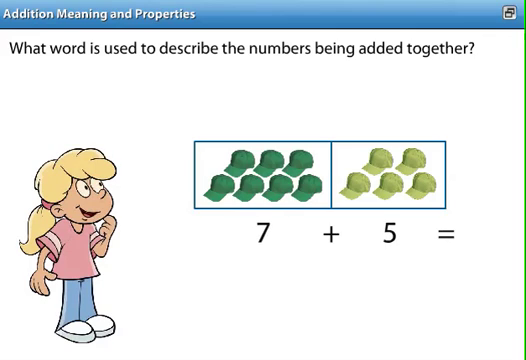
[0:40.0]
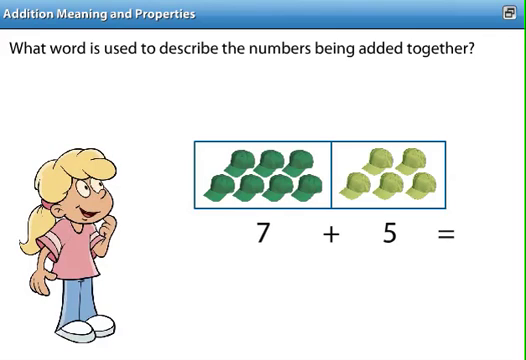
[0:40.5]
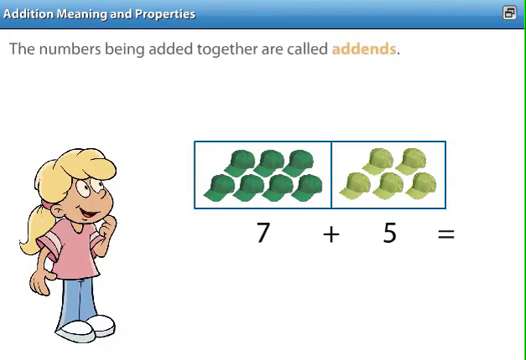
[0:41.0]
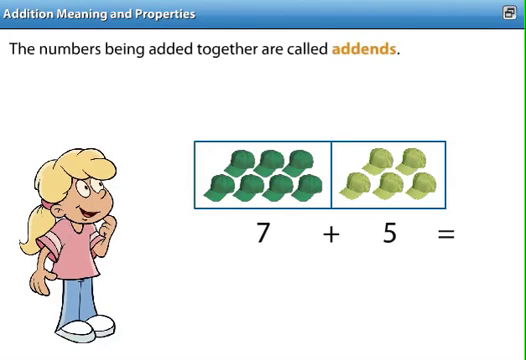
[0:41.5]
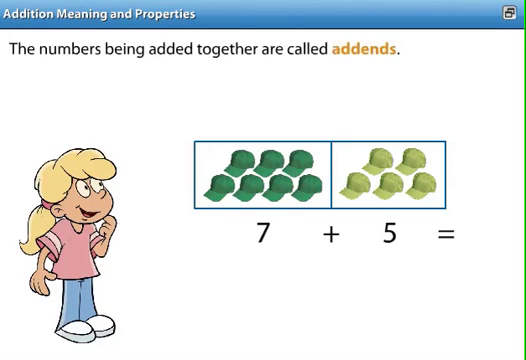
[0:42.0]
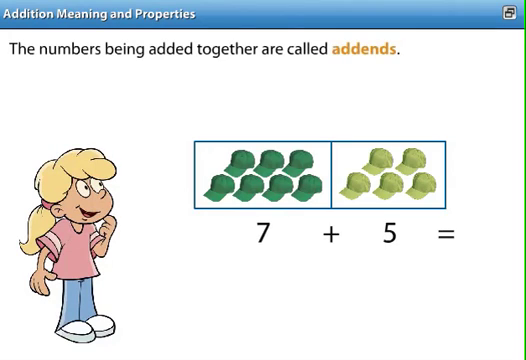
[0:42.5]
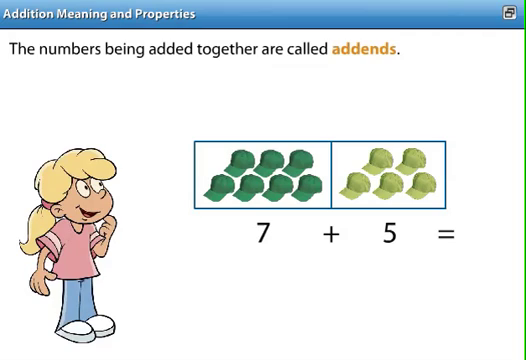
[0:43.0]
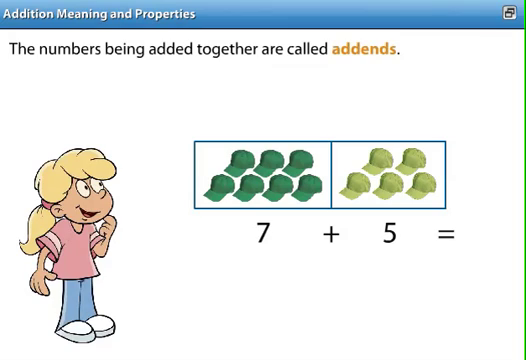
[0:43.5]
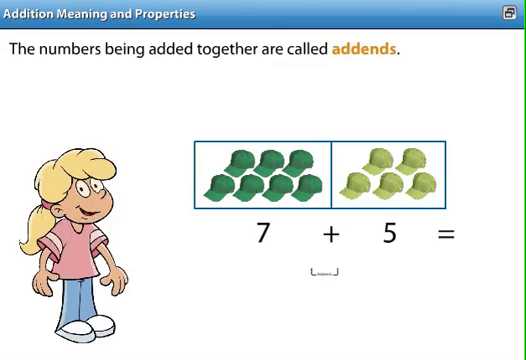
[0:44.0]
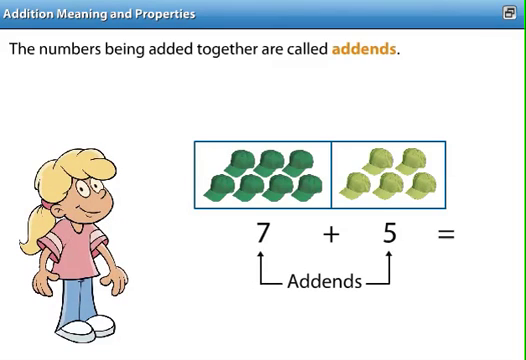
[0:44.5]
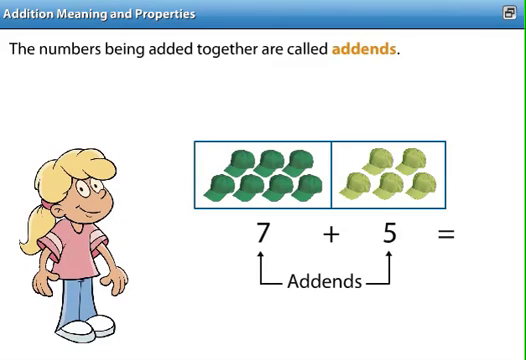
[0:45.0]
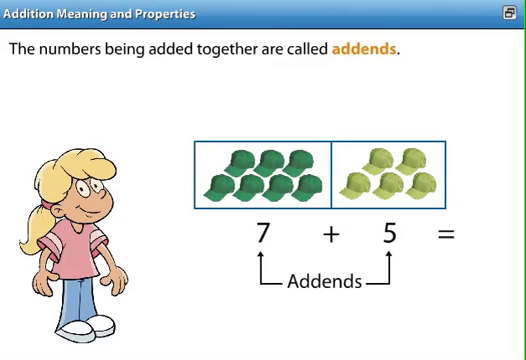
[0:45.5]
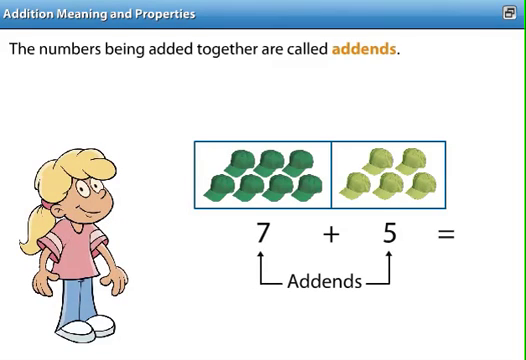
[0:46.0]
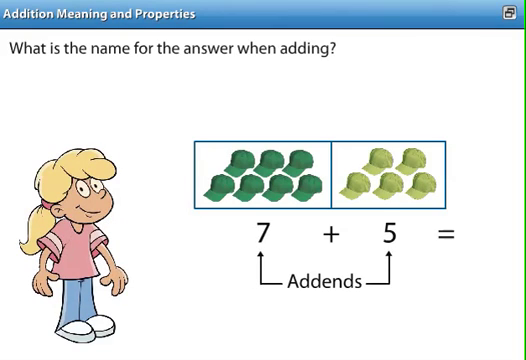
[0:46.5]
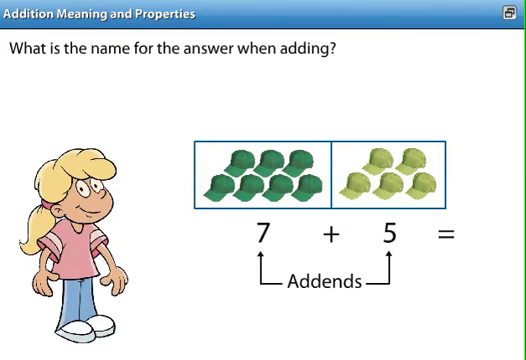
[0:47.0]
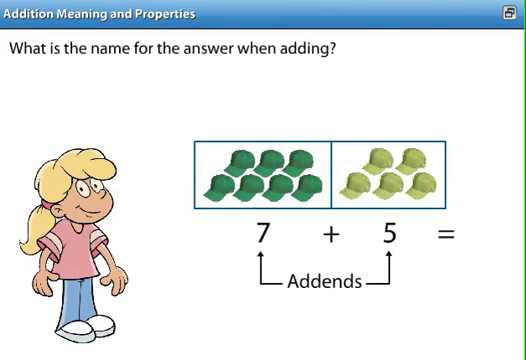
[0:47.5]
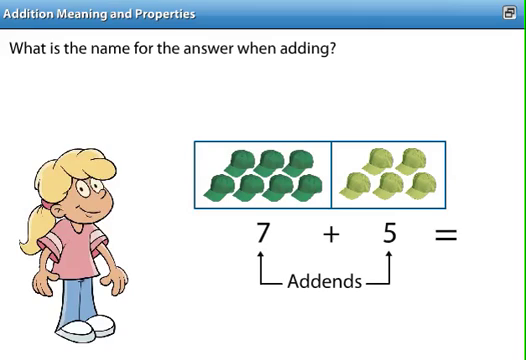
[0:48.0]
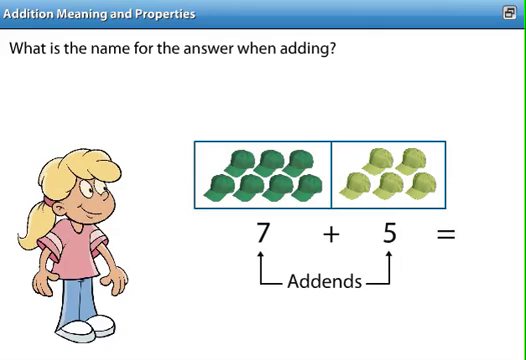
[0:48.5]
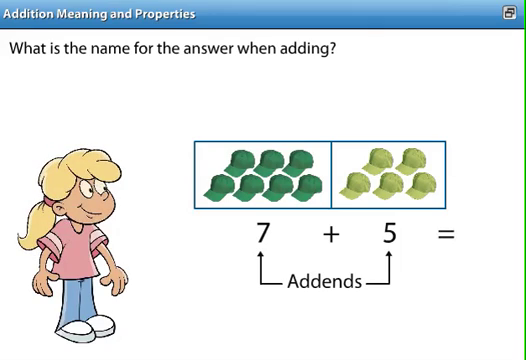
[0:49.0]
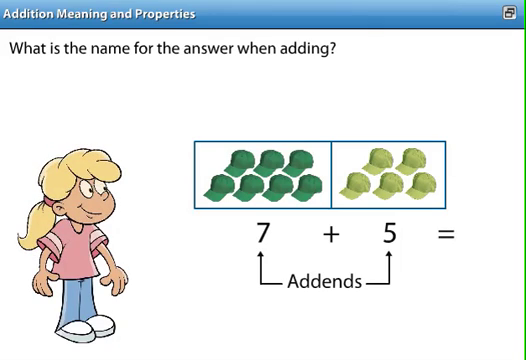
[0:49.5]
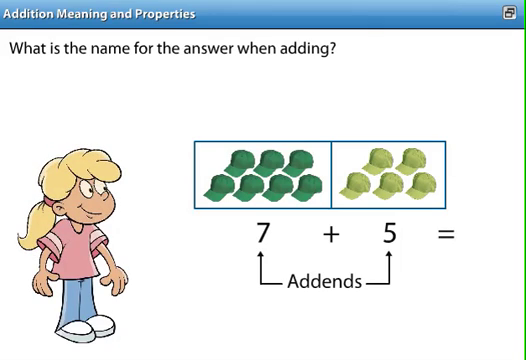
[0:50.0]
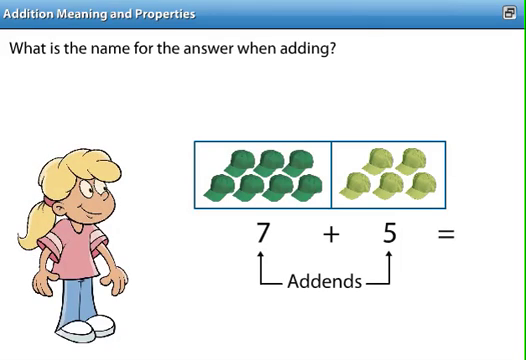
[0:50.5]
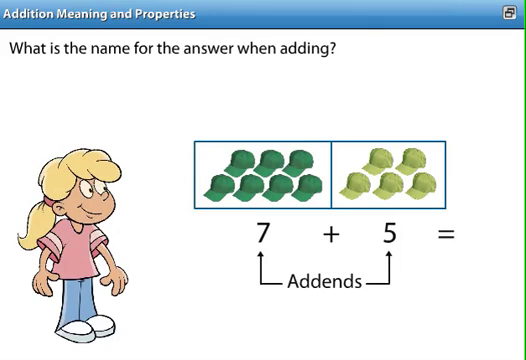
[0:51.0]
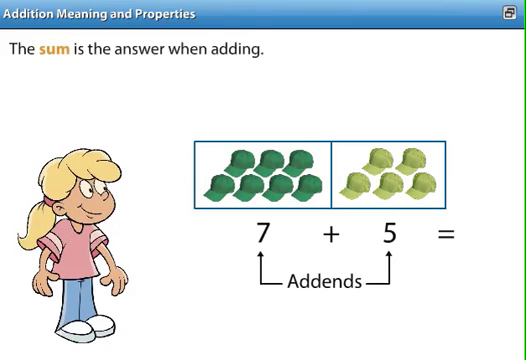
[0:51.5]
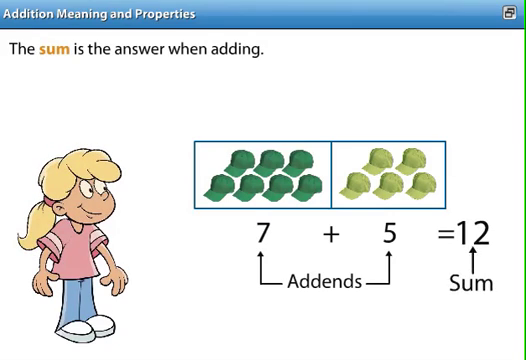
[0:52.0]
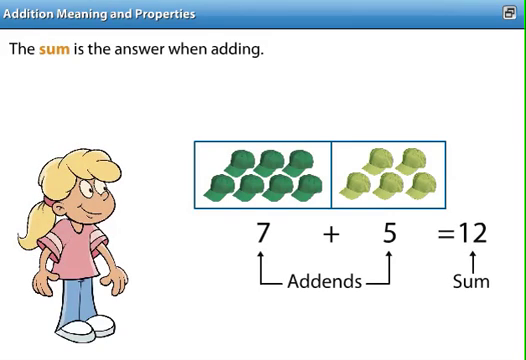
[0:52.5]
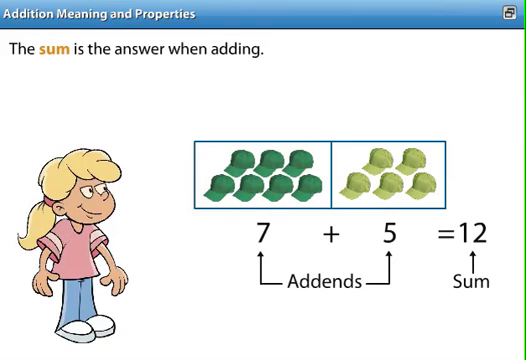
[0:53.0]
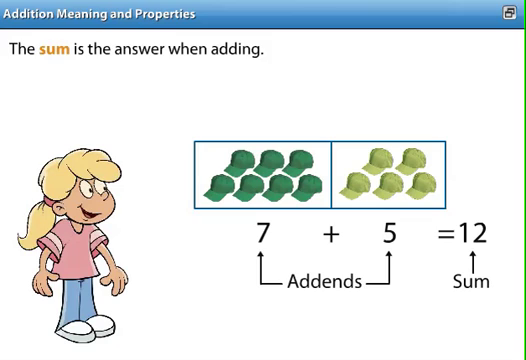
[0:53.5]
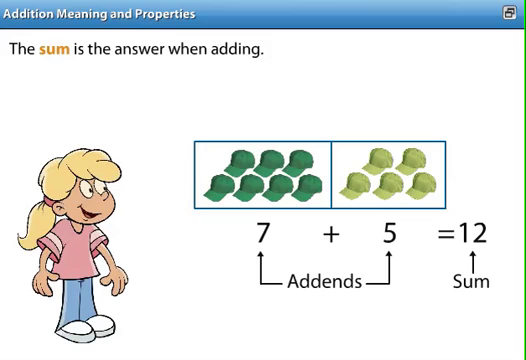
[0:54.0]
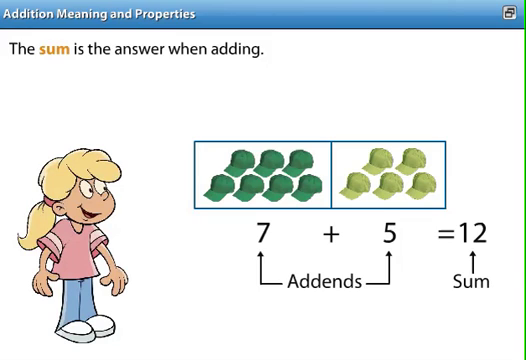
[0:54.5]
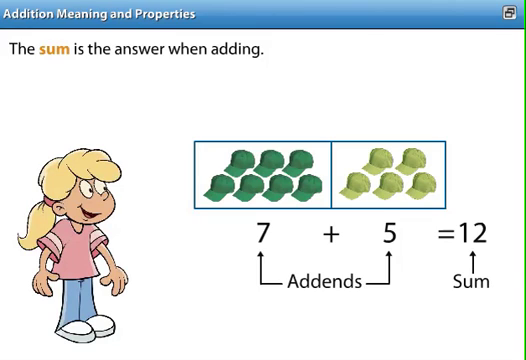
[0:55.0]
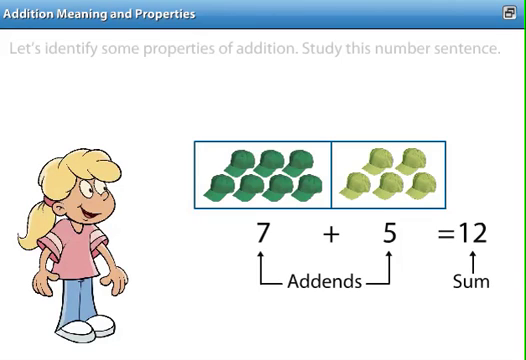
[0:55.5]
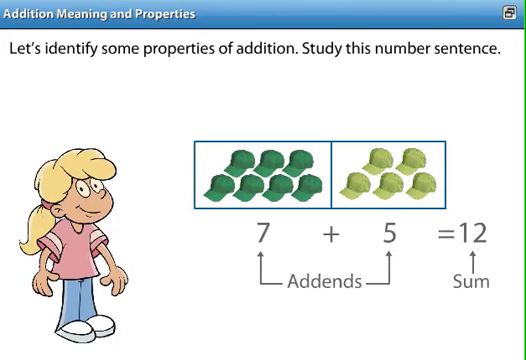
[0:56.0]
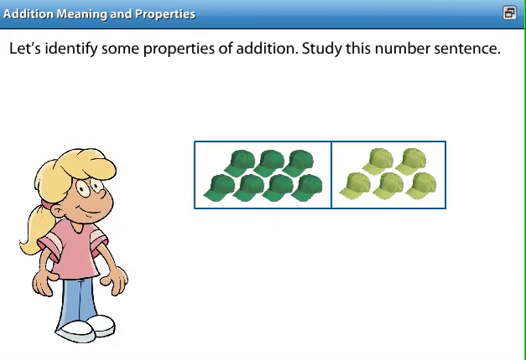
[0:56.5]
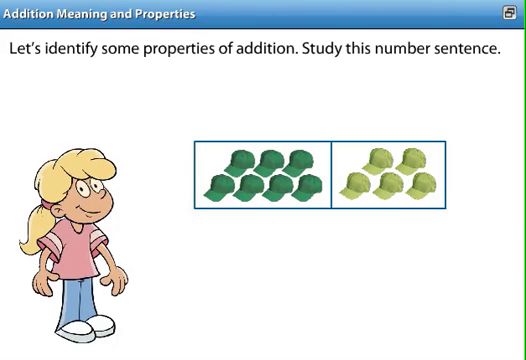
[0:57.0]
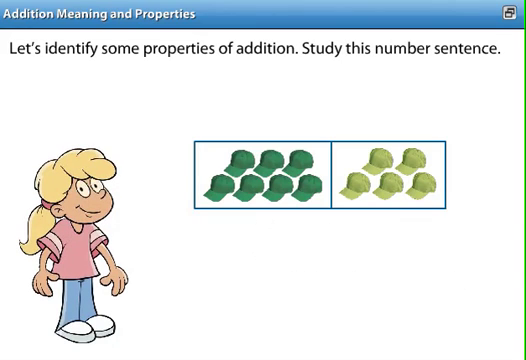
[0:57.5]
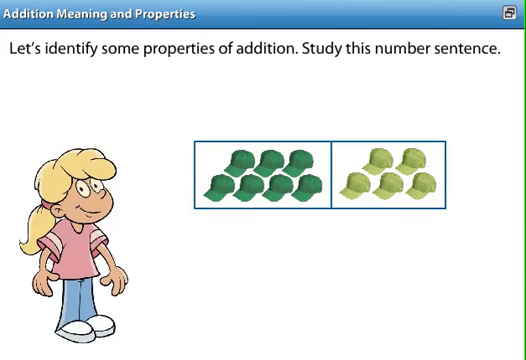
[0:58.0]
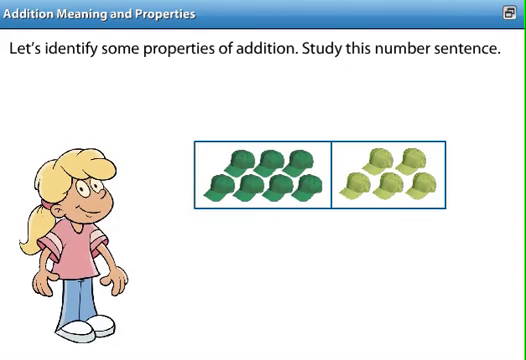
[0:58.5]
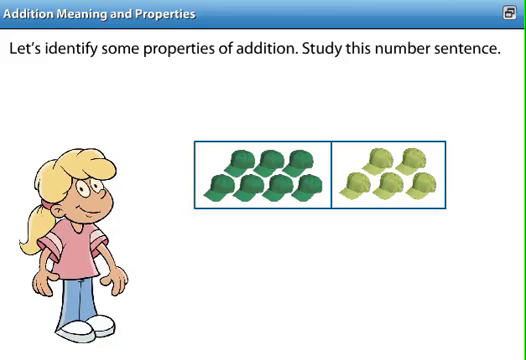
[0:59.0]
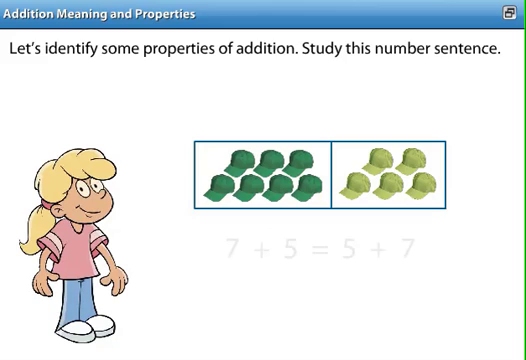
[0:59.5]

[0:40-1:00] The top sentence changes to answer the question, reading "the numbers being added together are called addends," and arrows pointing to the seven and five below converge on the word "addends." The question changes to "What is the name for the answer while adding?" and then to its answer, "The sum is the answer when adding." The number 12 appears to the right of the equal sign, with an arrow pointing to the word "sum." The top text changes again to "let's identify some properties of addition. Study this number sentence." and for a brief moment the equation seven plus five equals is seen at the bottom of the screen. The female cartoon figure is very engaging throughout, looking around, smiling and pointing with her fingers at things.